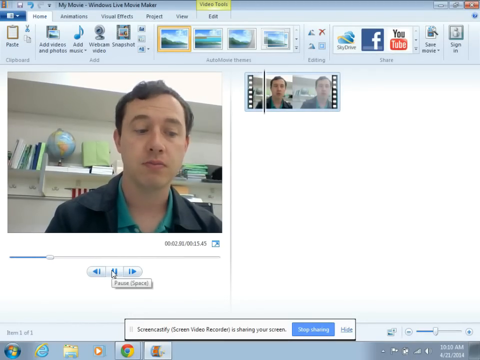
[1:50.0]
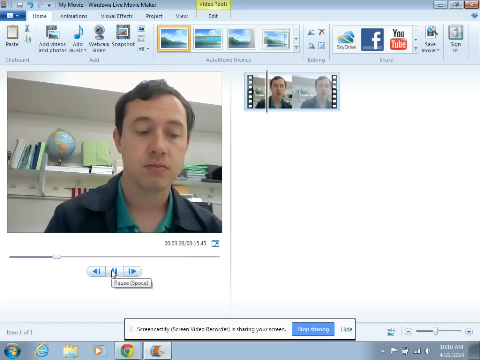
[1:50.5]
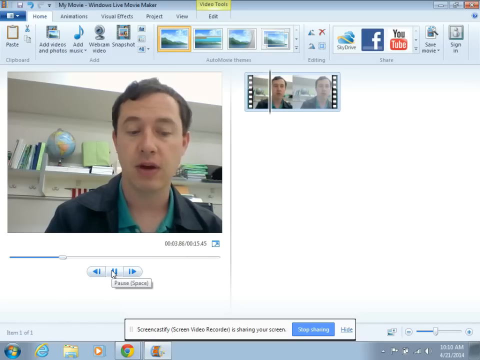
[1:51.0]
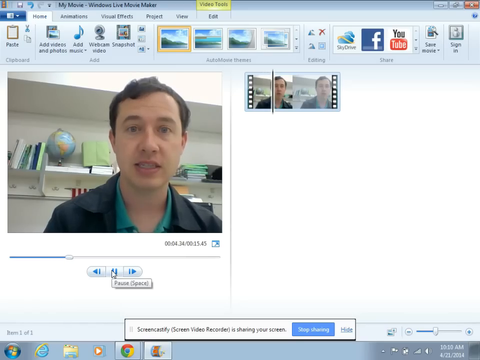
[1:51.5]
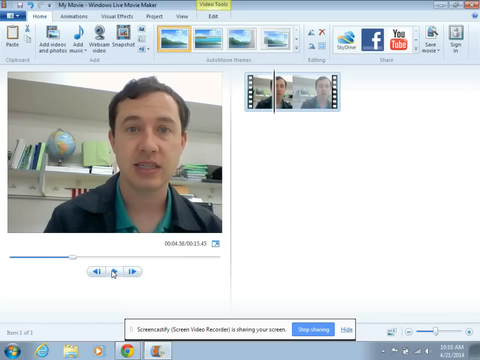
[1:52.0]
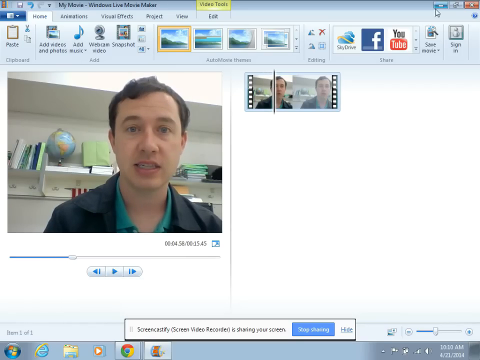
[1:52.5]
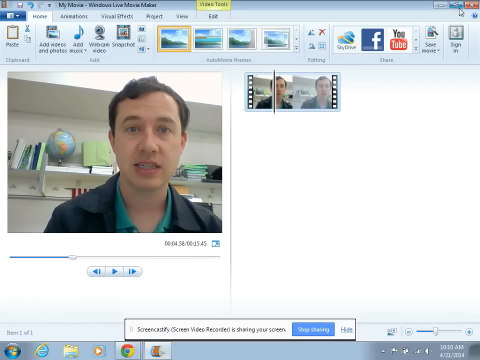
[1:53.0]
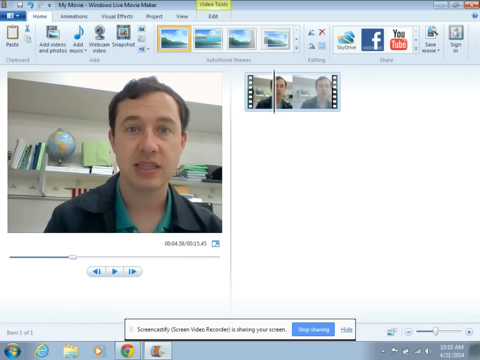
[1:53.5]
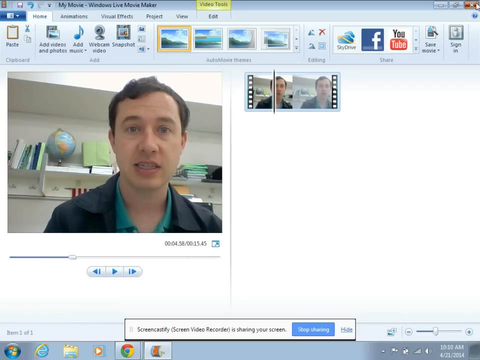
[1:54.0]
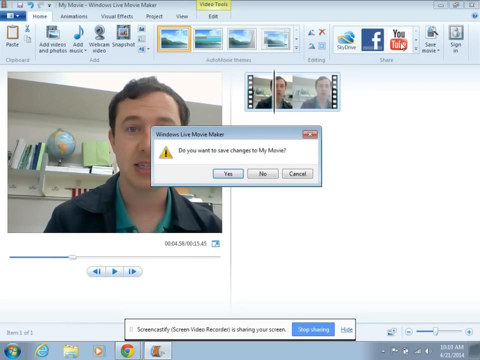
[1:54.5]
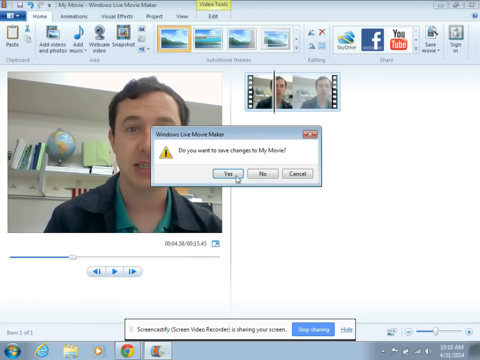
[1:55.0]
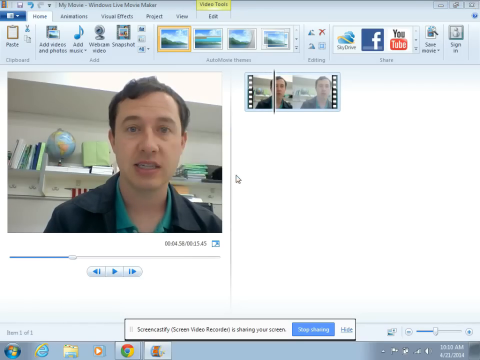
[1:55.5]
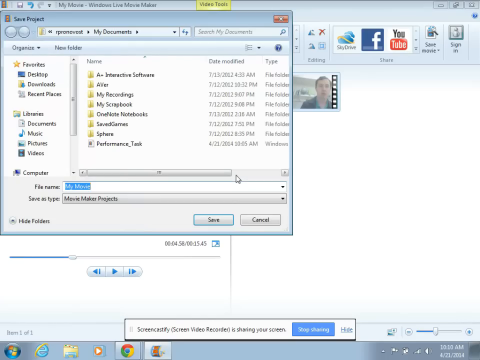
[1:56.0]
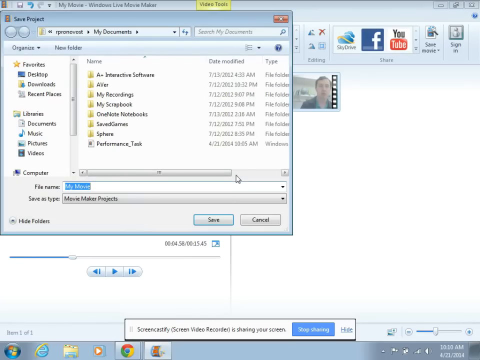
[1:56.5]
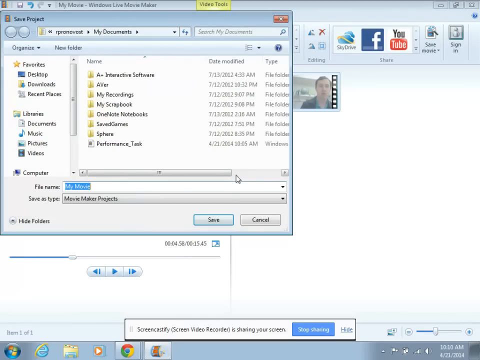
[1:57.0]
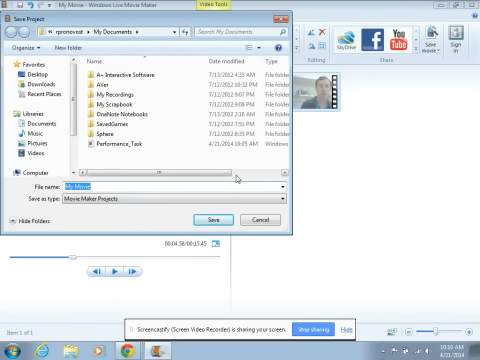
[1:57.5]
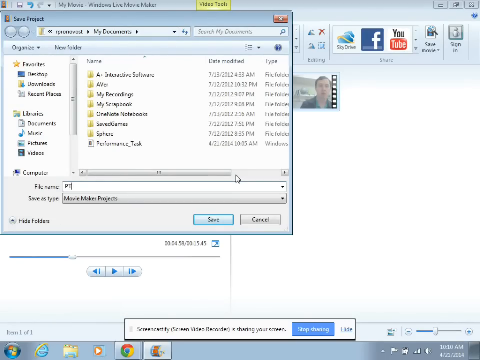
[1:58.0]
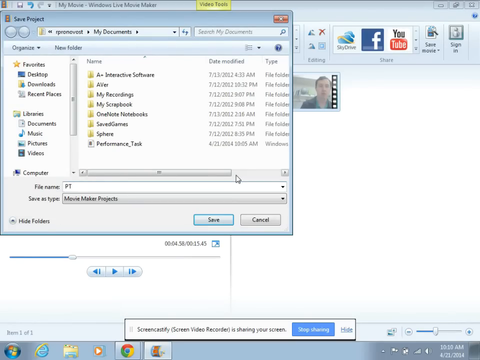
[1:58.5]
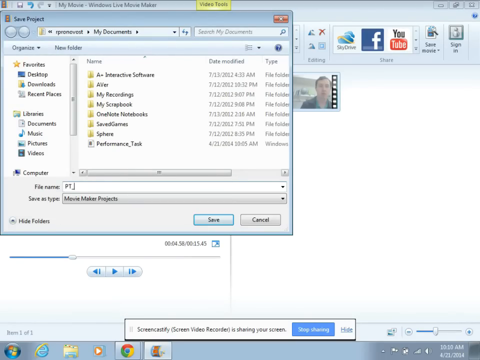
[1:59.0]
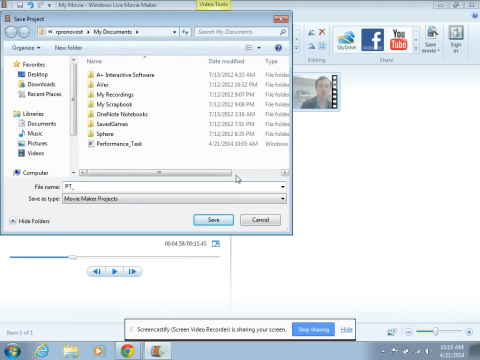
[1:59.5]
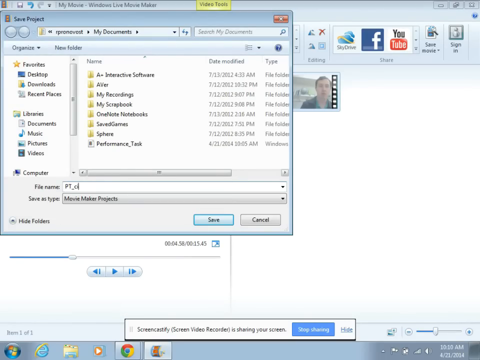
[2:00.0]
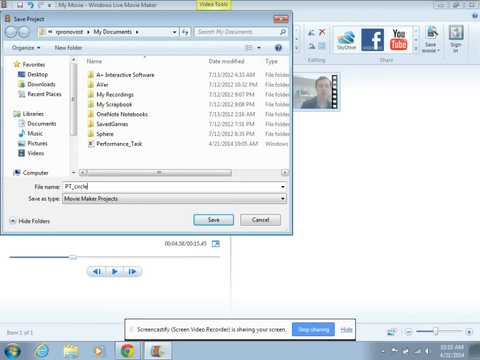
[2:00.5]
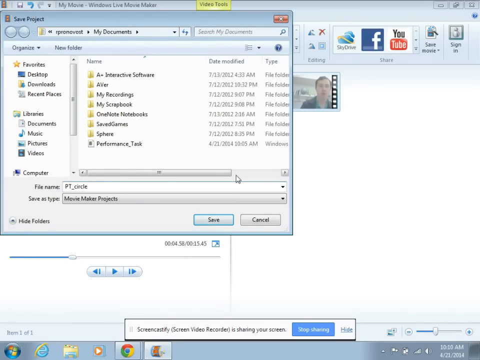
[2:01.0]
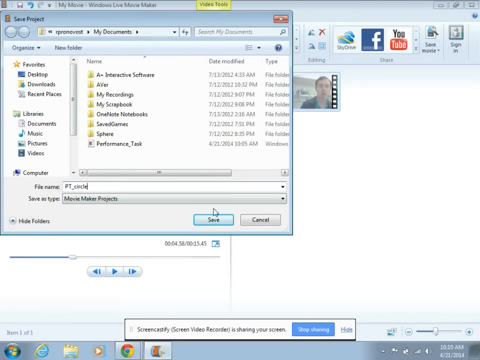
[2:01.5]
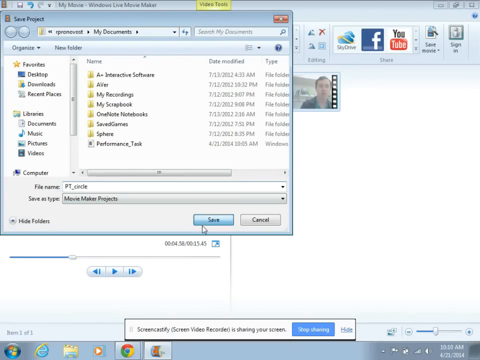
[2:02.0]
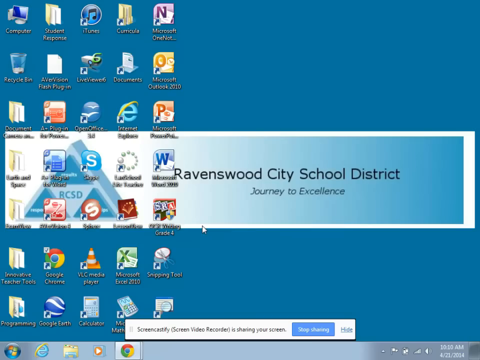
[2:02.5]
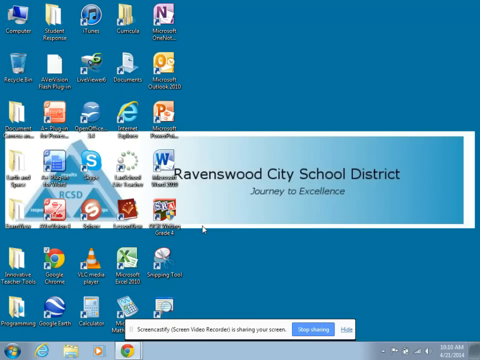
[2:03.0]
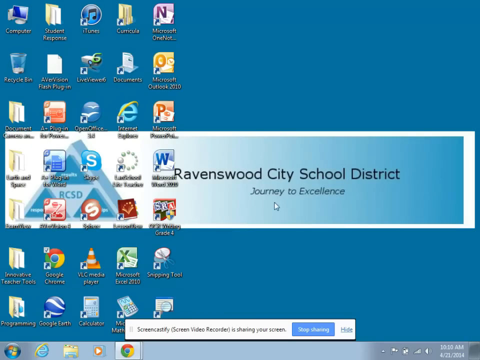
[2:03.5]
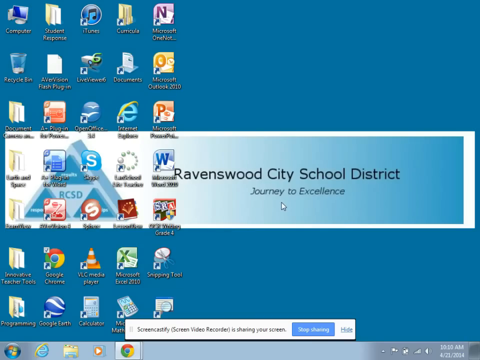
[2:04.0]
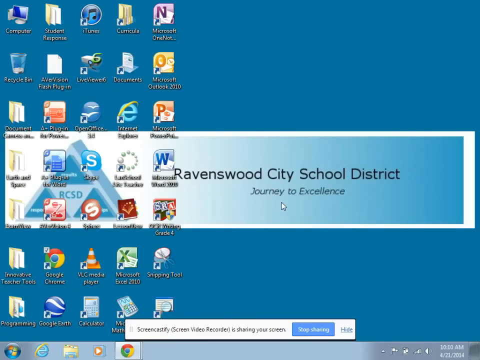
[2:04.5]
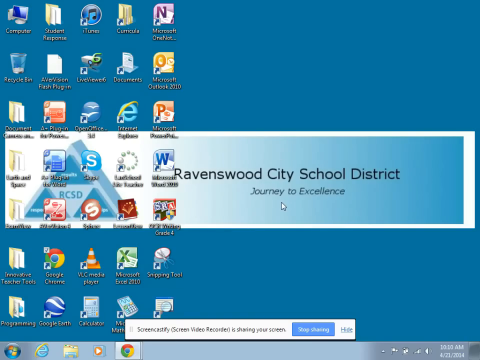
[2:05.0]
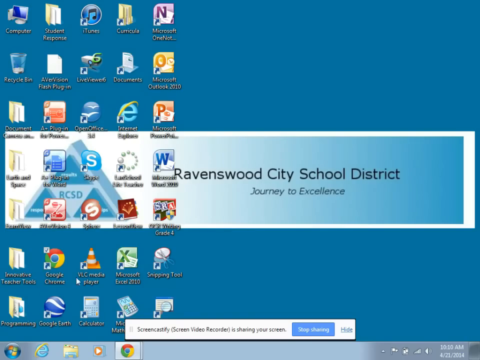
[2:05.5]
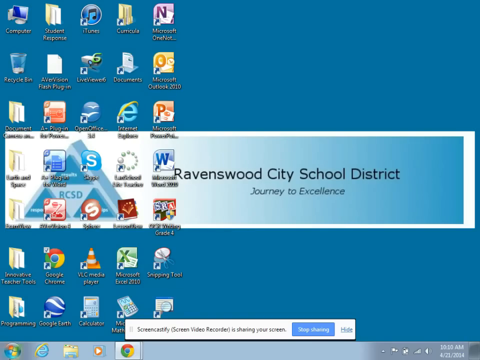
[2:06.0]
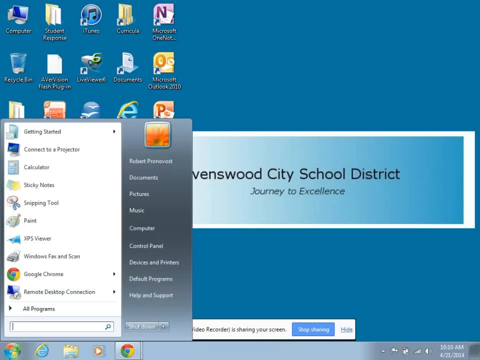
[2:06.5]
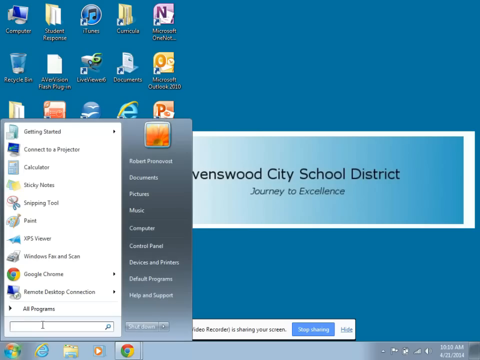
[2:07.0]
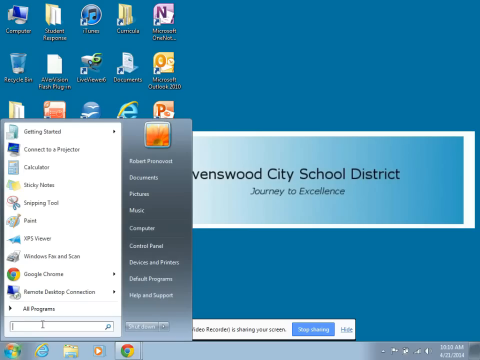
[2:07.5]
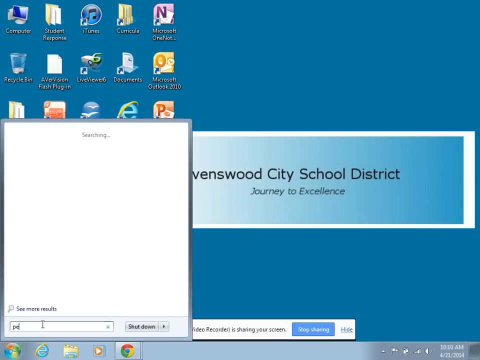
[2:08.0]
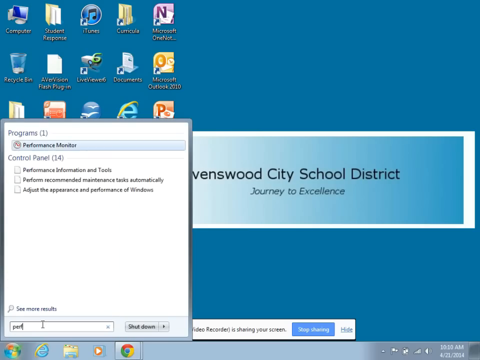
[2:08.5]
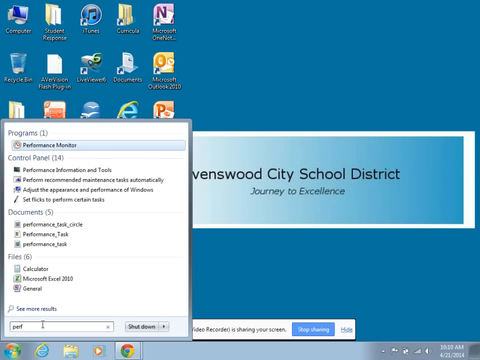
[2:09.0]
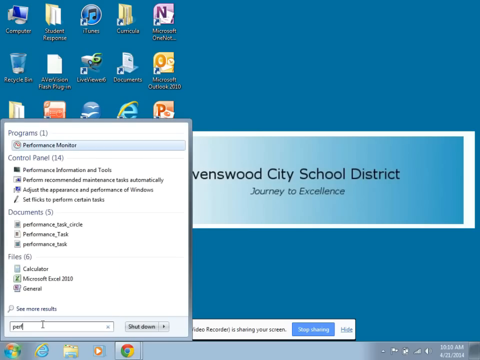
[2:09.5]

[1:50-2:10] The man appears to be either recording another video clip or possibly playing the previous one back. He talks to the camera again, and his movements are clearly visible as he interacts with the screen. He seems to be saving these video clips. After saving, he exits the video editing app, goes back to the home screen and opens a new application called performance monitor.